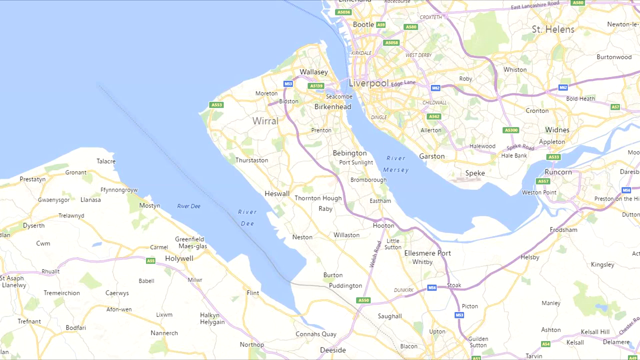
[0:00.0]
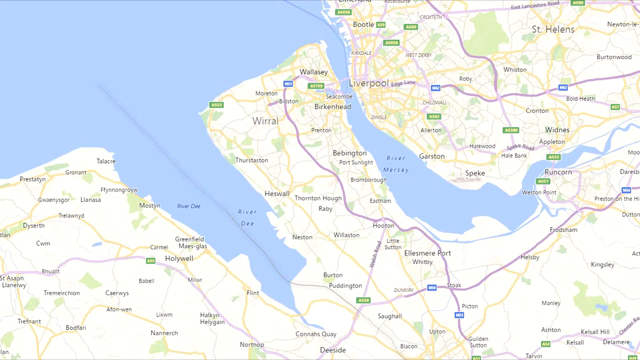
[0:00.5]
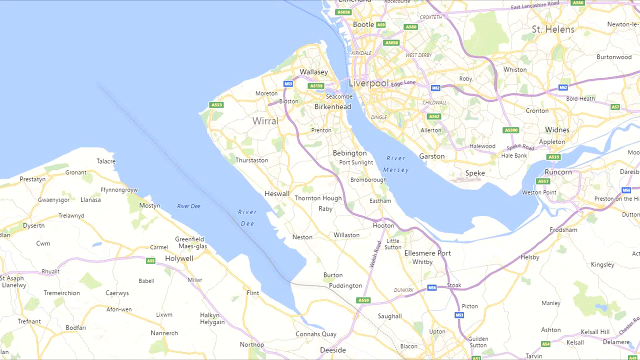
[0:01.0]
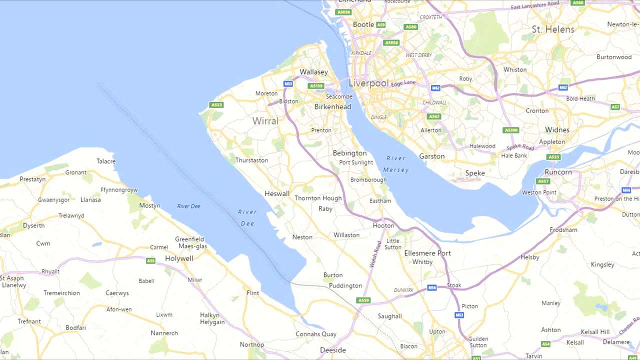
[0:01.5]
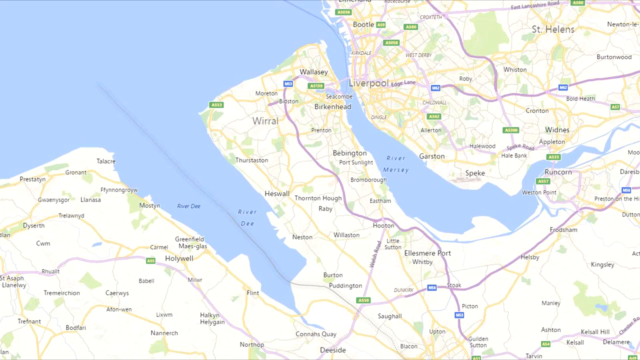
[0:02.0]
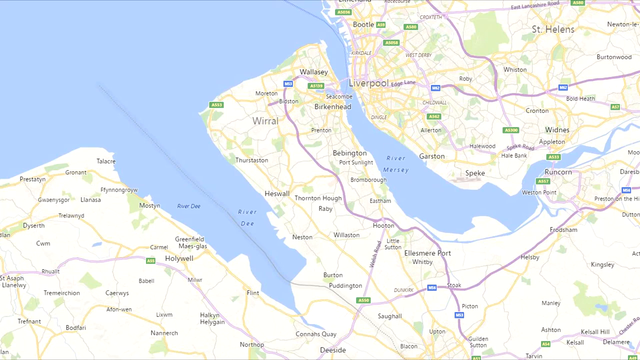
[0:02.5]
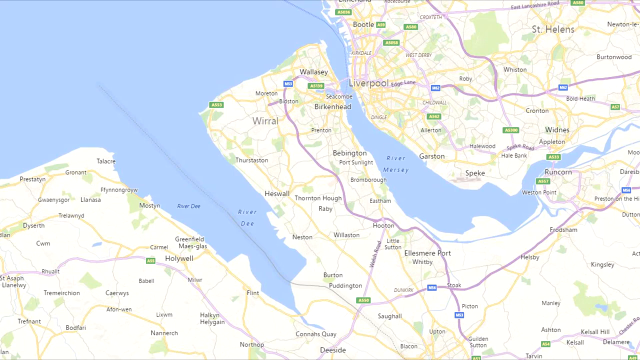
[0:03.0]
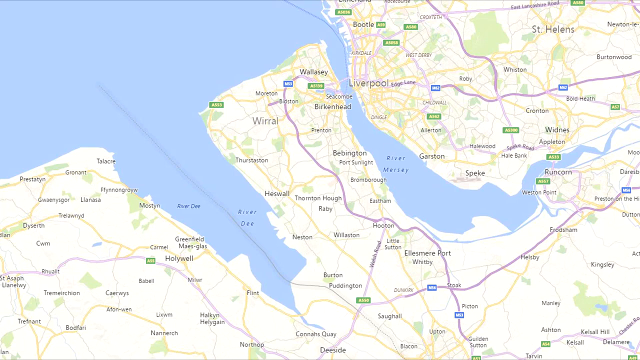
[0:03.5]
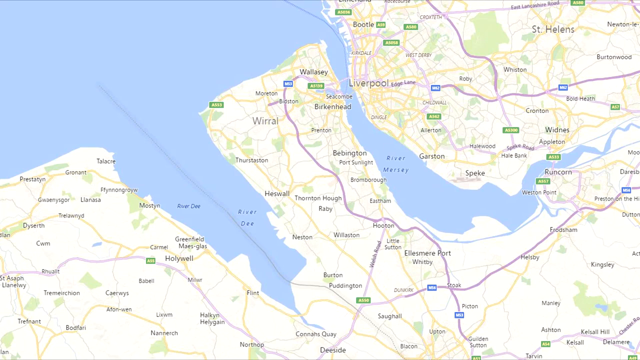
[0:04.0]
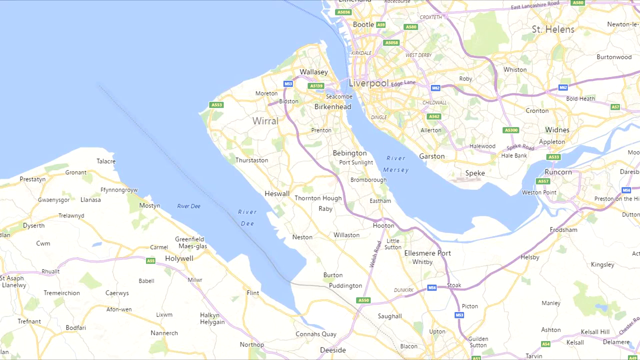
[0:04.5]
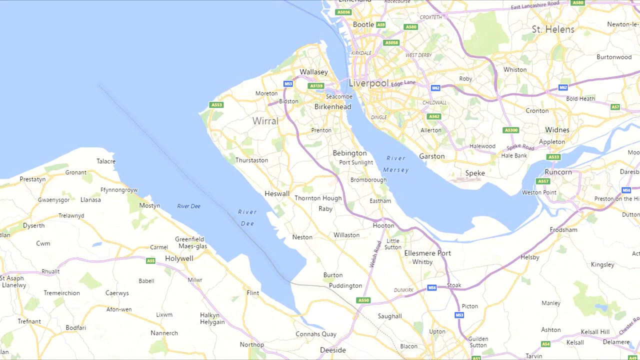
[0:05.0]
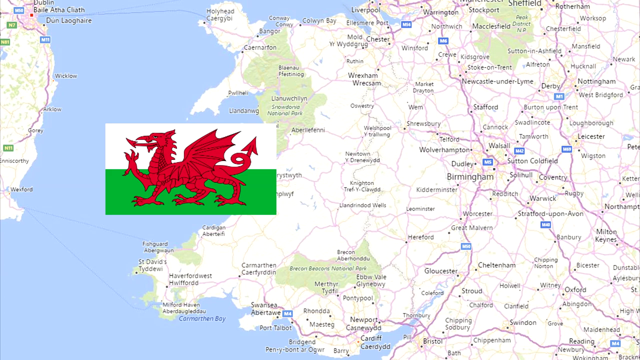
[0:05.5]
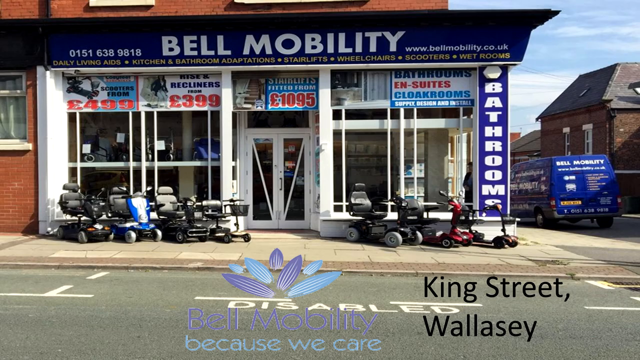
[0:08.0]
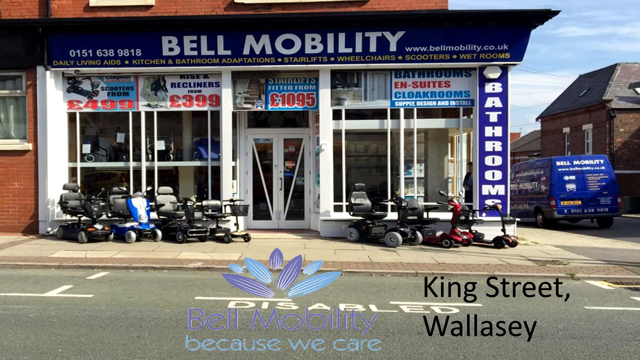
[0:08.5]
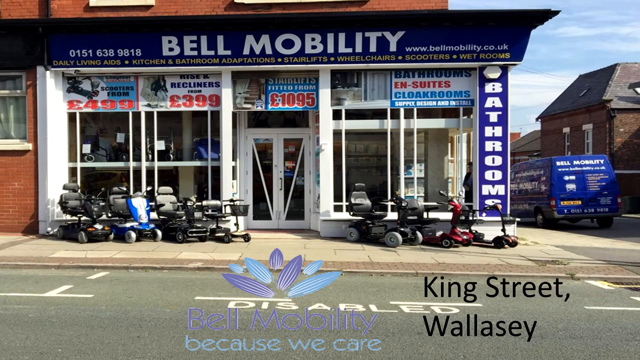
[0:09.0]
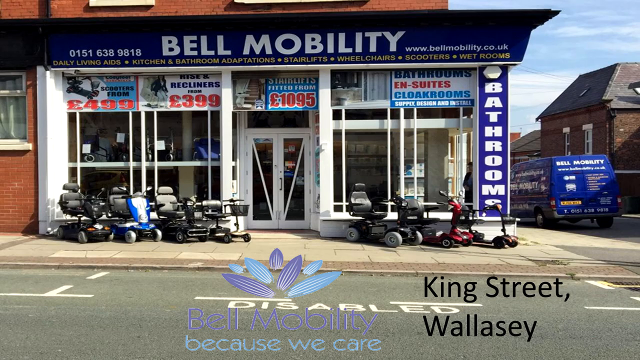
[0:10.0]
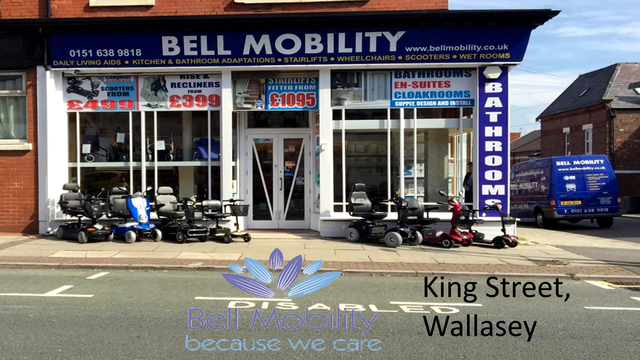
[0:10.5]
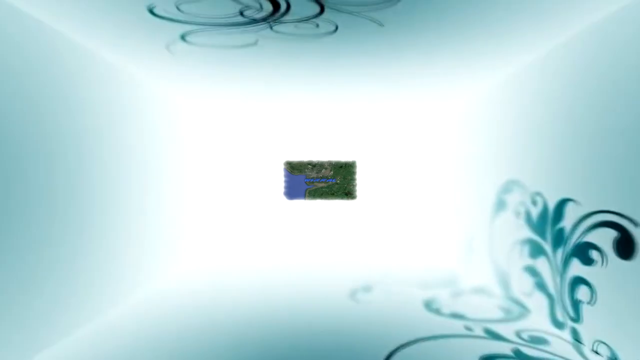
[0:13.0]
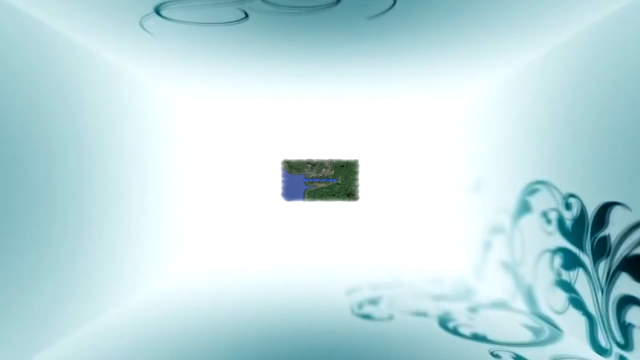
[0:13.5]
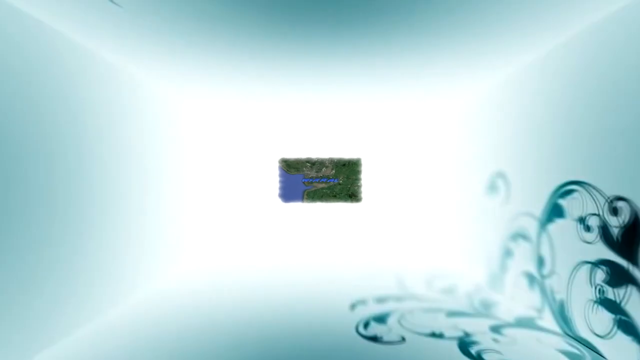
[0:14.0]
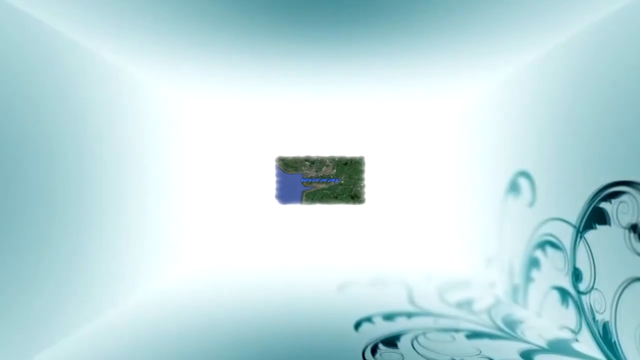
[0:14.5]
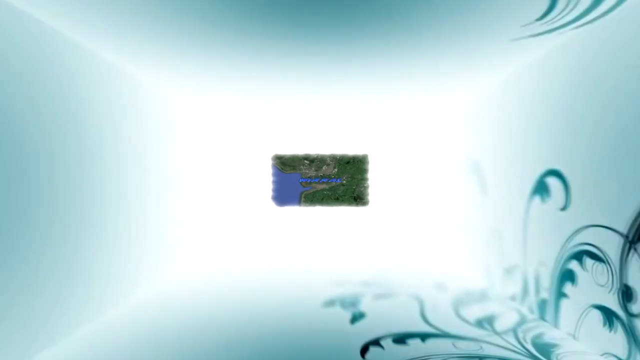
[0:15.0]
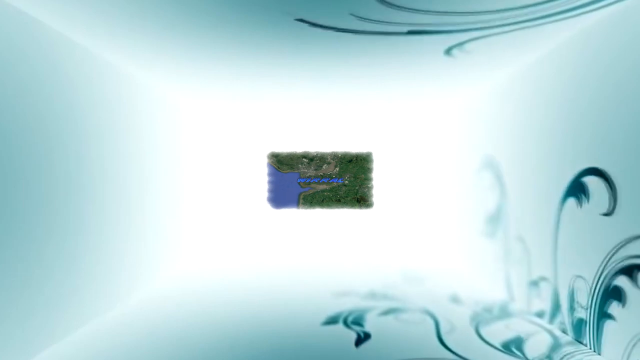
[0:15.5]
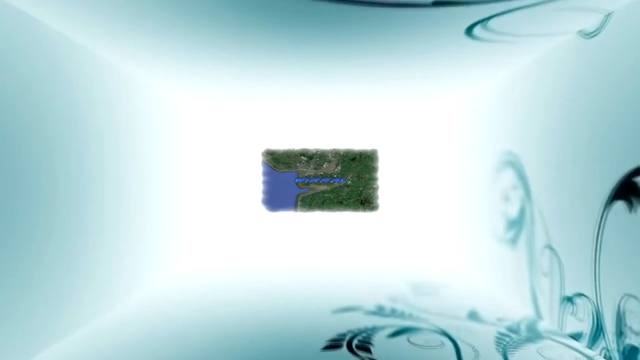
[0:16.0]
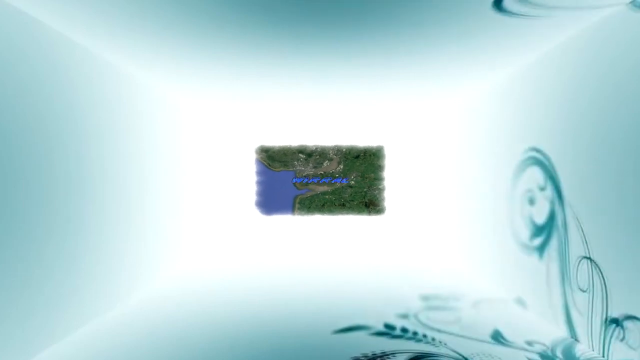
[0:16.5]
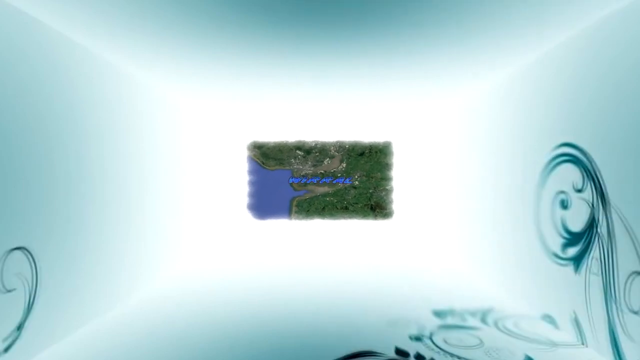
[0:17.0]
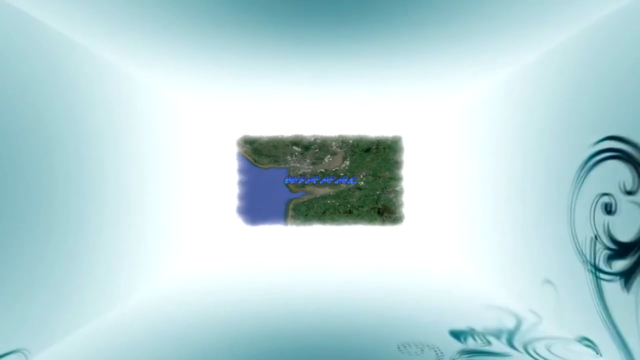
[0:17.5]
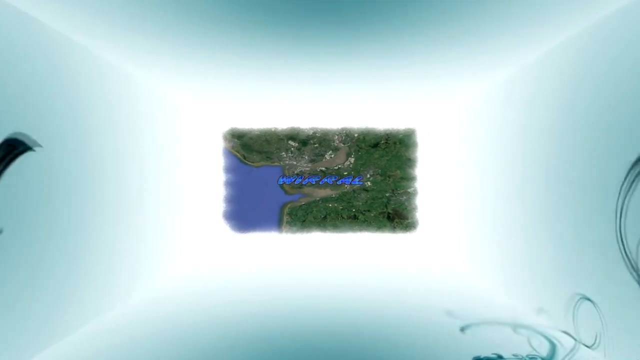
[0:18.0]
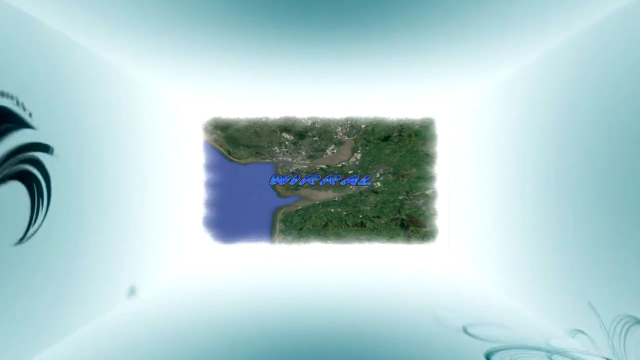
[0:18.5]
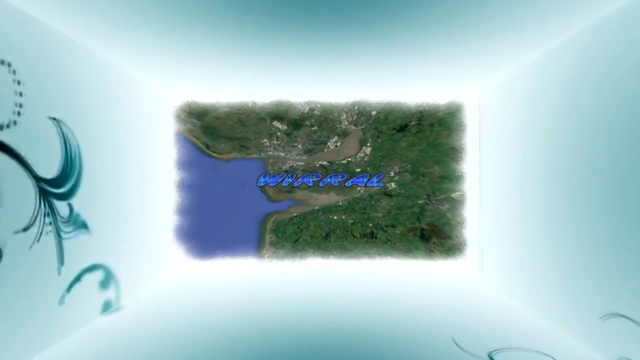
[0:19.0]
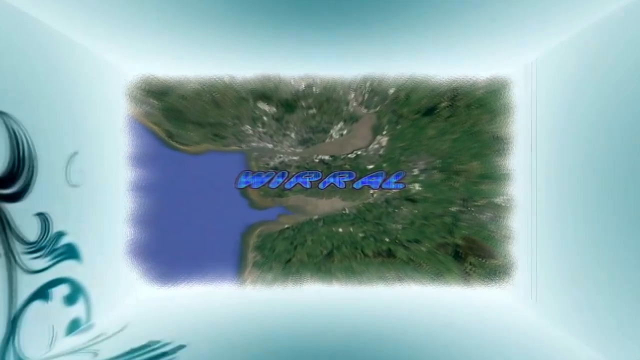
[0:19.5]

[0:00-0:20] A zoomed-in still image of a map shows a small part of the United Kingdom, an area within Liverpool. The Wirral, a piece of land jutting out with the River Mersey on one side and the River Dee on the other, takes up nearly the entire screen, right in the centre. The map shows the M62 motorway running from the Wirral further inland, some of the main road networks around Liverpool, and the Wallasey Tunnel, which goes under the River Mersey and connects the Bootle area to the Wallasey-Wirral area and Birkenhead. The still image stays for around six seconds, then cuts straight to another still map image, a close-up of the Birmingham area. Birmingham is in the centre; the map reaches up as far as Macclesfield, Stockport and Warrington, south to Chipping Sodbury and Gloucester, and to the left as far as Wales. This map takes up most of the screen and stays for a couple of seconds. Next comes a still photograph of a shop front called BAL Mobility. A small part of the road is at the bottom of the screen with the BAL Mobility icon, and part of the road is sectioned off for disabled parking. The shop front is cleanly decorated, mostly in white, with a lot of window pane, so the inside of the shop can be seen. Outside the shop, seven mobility scooters are lined up at a slight angle along the front, like a small-scale car showroom. Posters in the shop windows give prices and advertise different mobility aids, including scooters and rise recliners. The video then cuts to a moving image: a screen with a blue background and ornate lines coming out of the bottom right-hand corner that look like peacock feathers. The camera zooms in to a small square in the middle of the screen that looks like another map, and as the square fills the screen, it turns out to be a map of the Wirral.